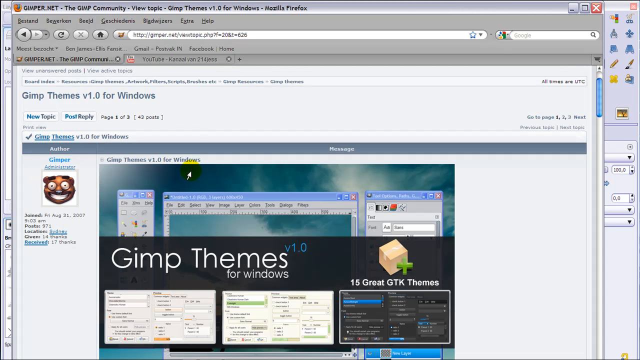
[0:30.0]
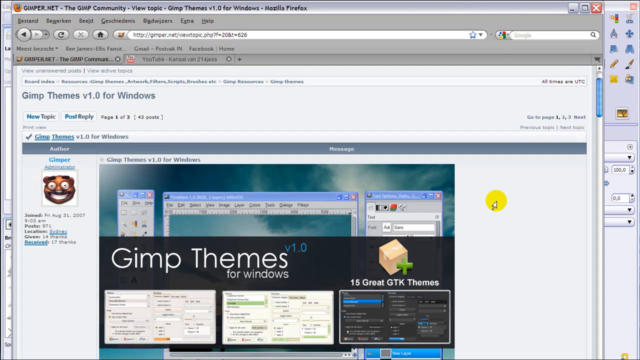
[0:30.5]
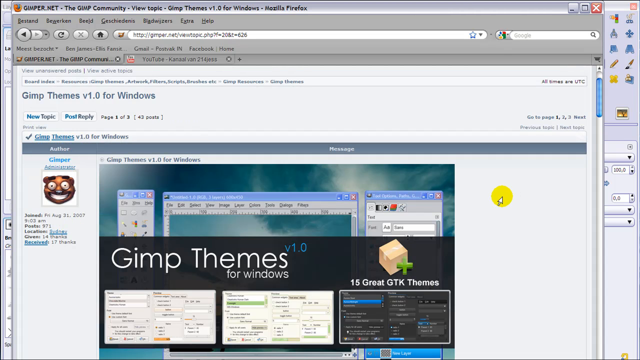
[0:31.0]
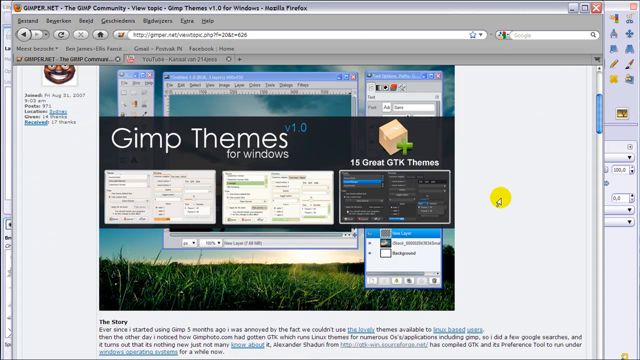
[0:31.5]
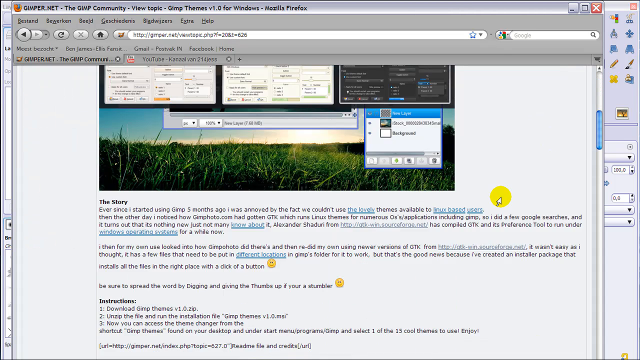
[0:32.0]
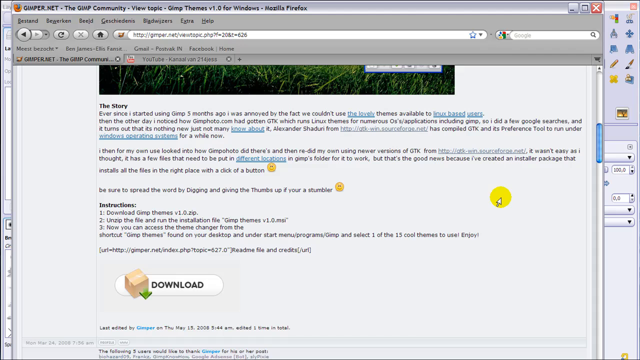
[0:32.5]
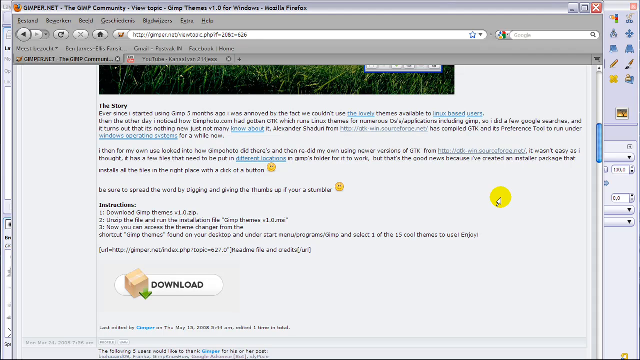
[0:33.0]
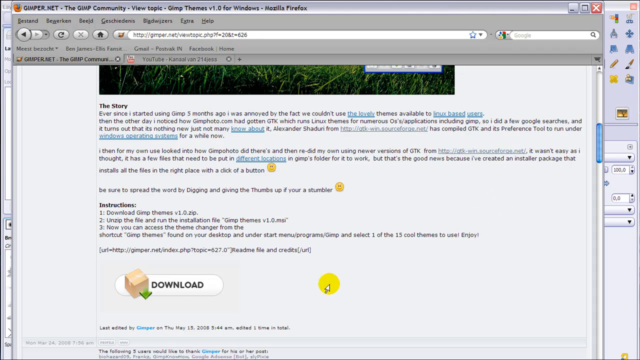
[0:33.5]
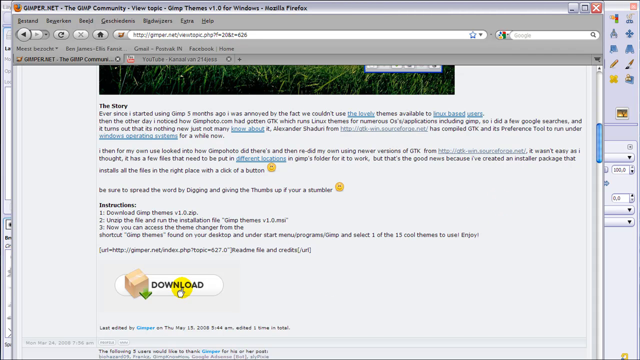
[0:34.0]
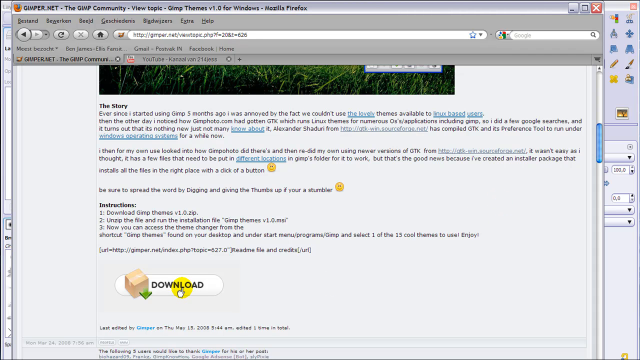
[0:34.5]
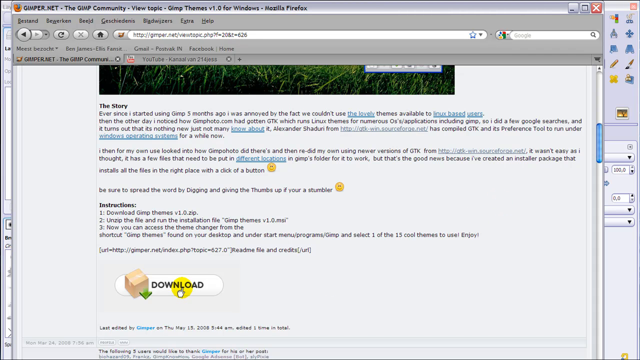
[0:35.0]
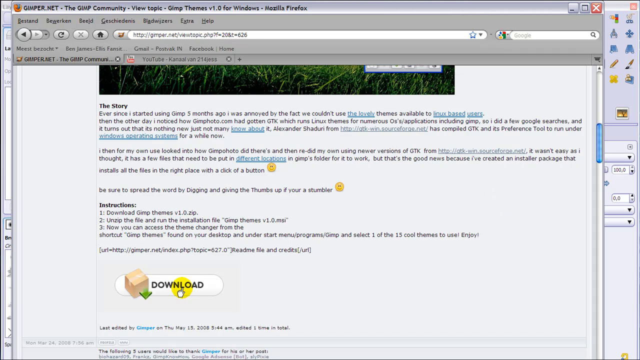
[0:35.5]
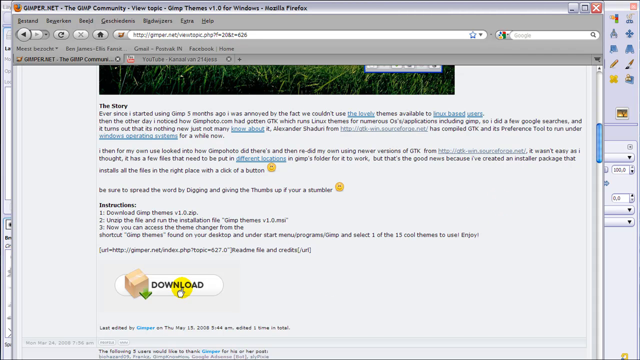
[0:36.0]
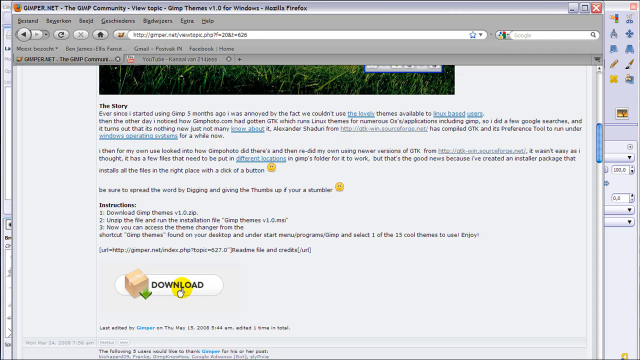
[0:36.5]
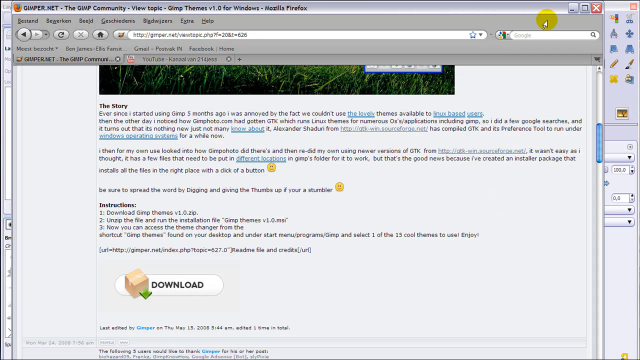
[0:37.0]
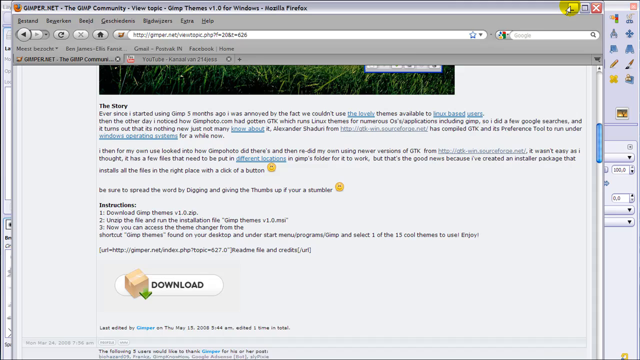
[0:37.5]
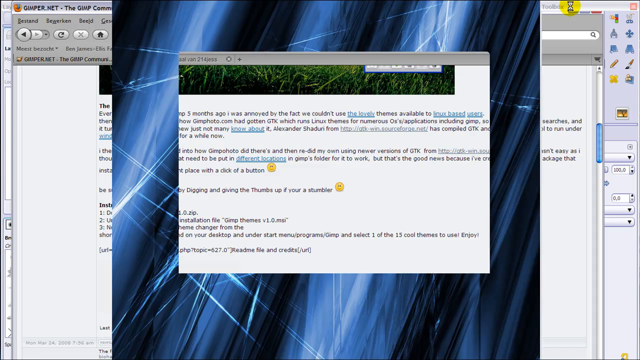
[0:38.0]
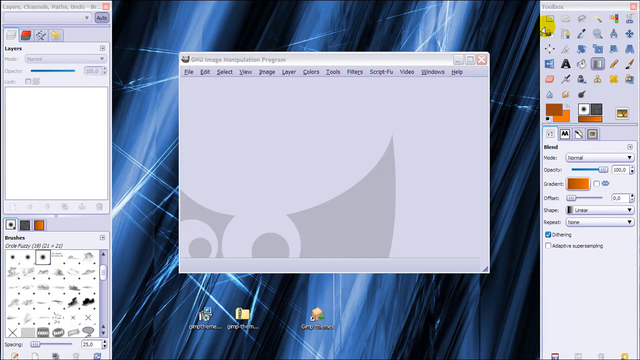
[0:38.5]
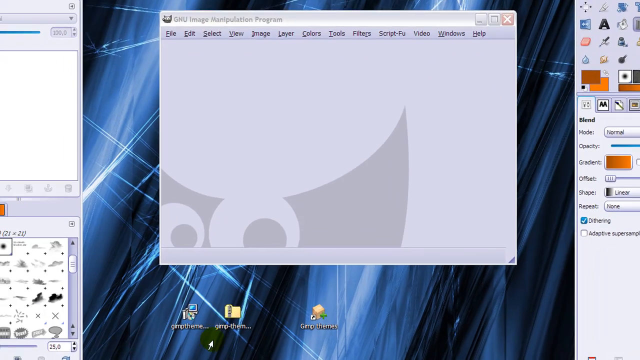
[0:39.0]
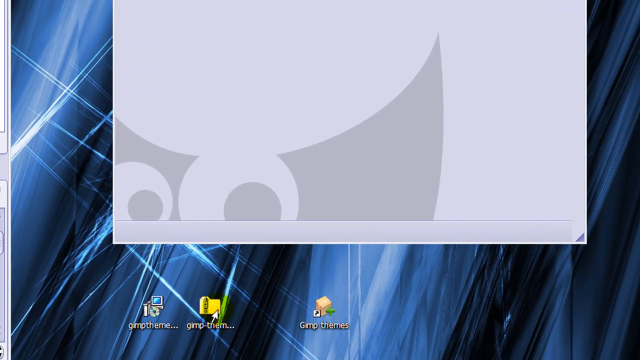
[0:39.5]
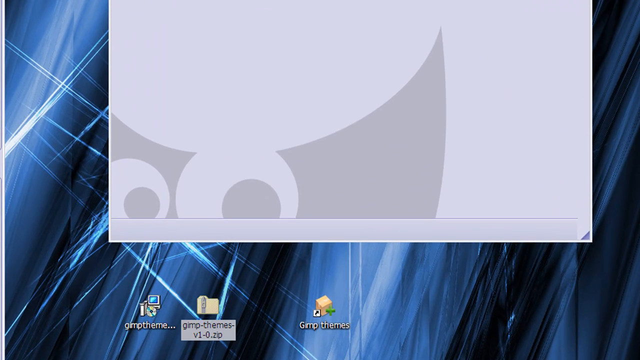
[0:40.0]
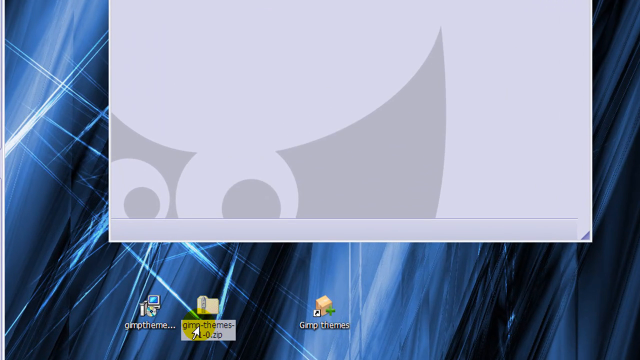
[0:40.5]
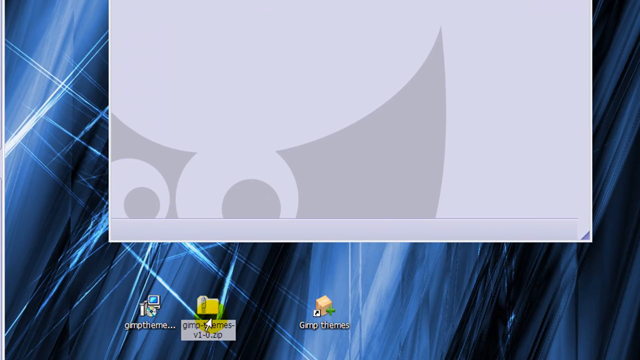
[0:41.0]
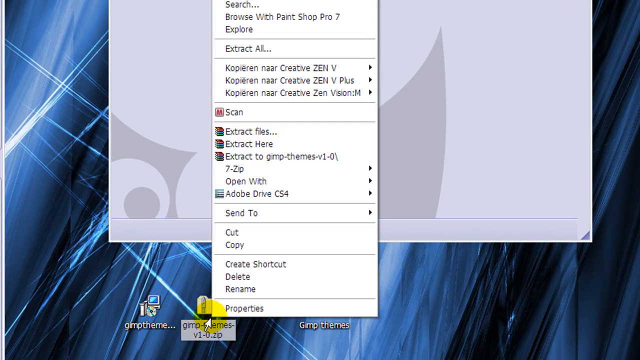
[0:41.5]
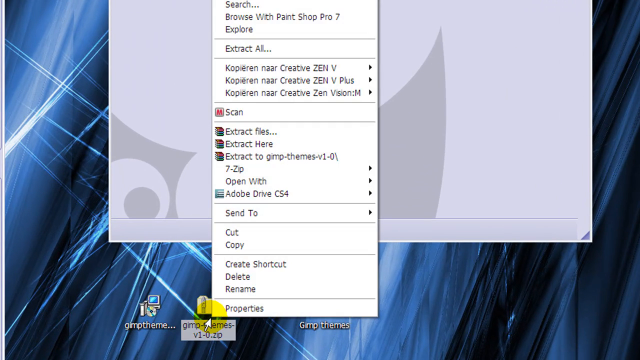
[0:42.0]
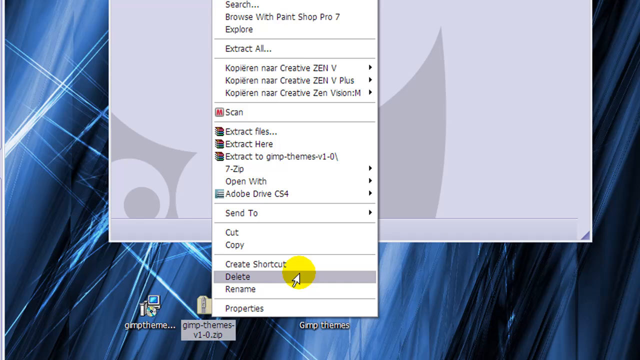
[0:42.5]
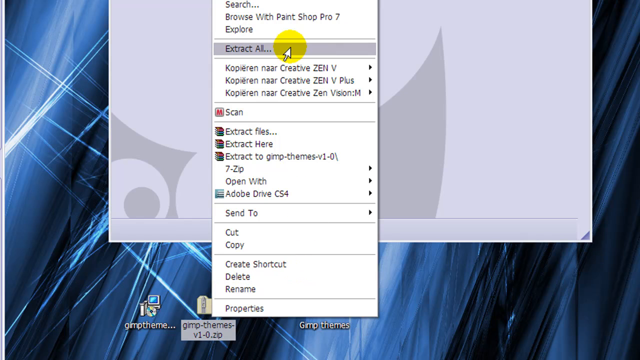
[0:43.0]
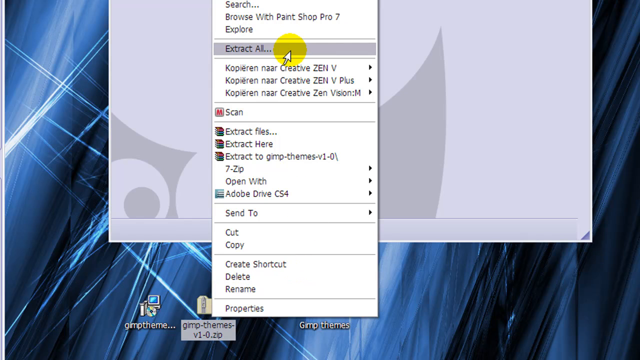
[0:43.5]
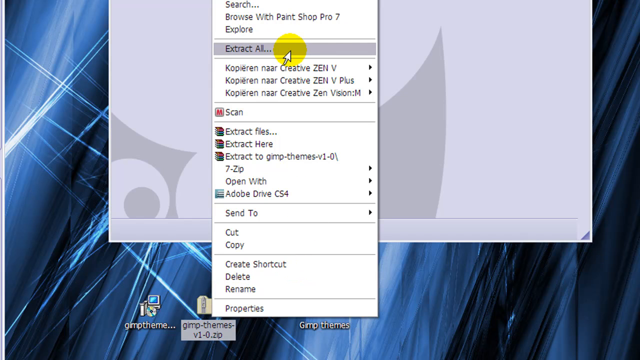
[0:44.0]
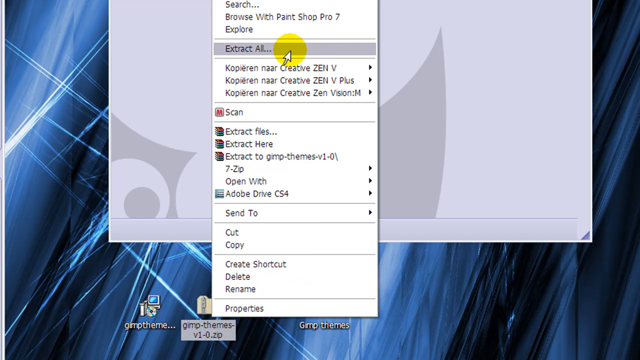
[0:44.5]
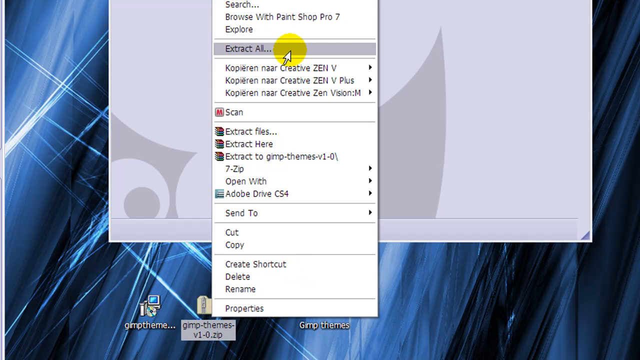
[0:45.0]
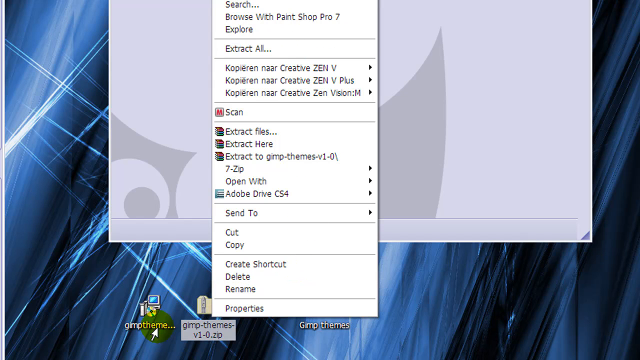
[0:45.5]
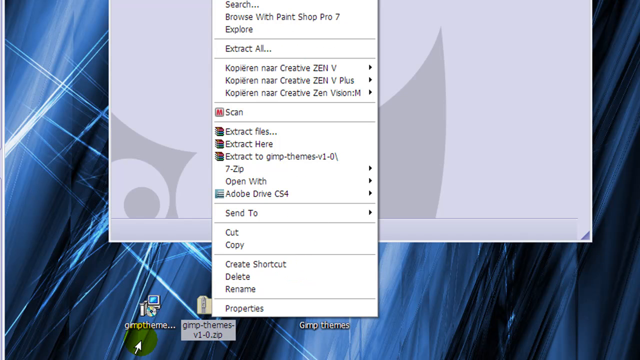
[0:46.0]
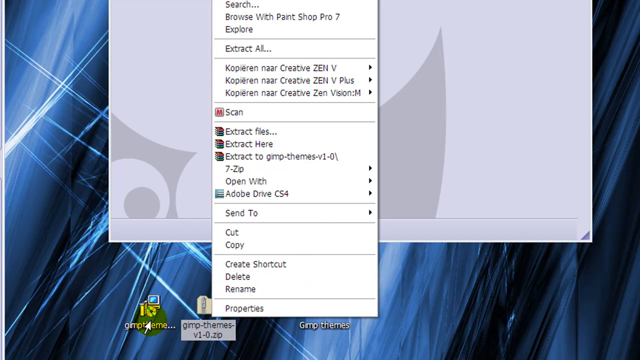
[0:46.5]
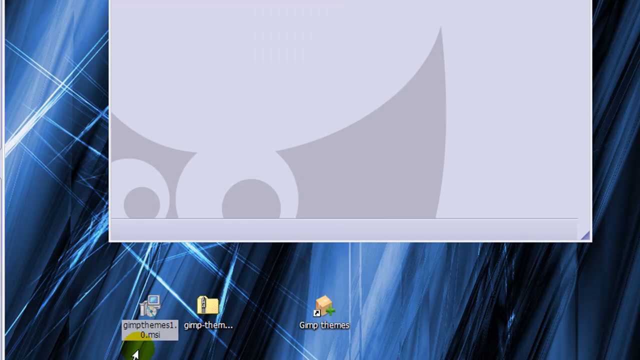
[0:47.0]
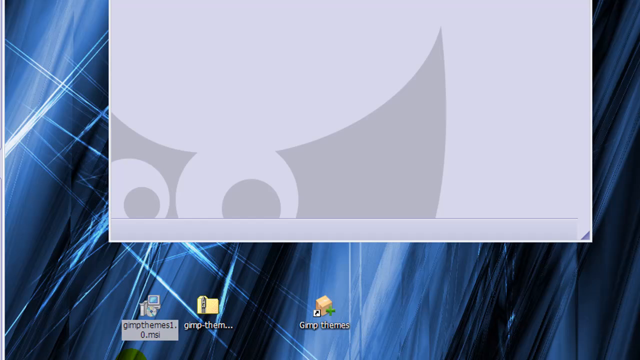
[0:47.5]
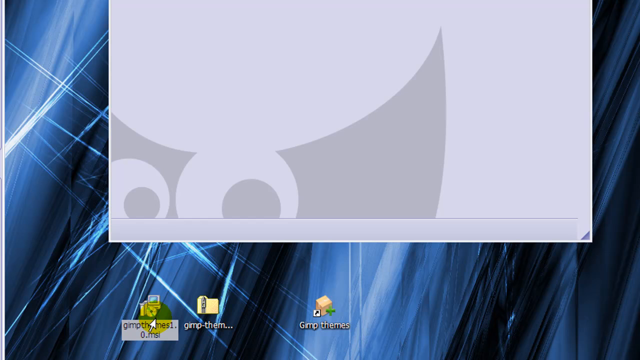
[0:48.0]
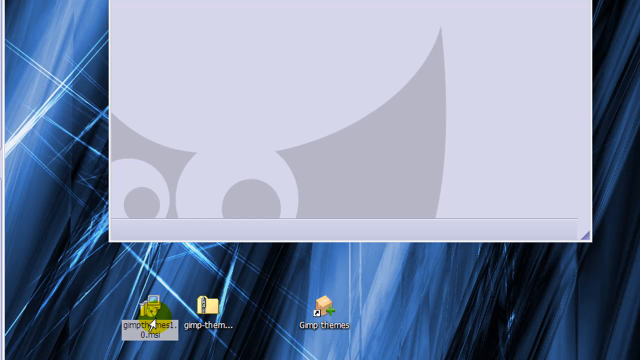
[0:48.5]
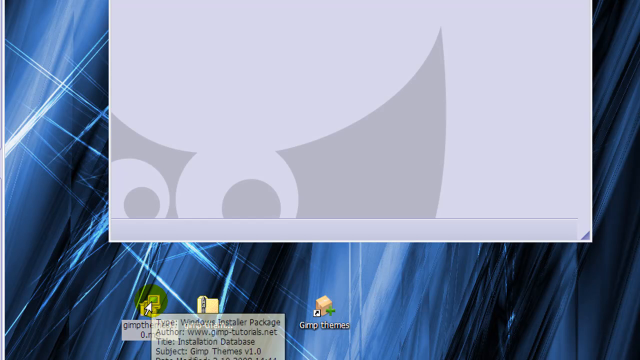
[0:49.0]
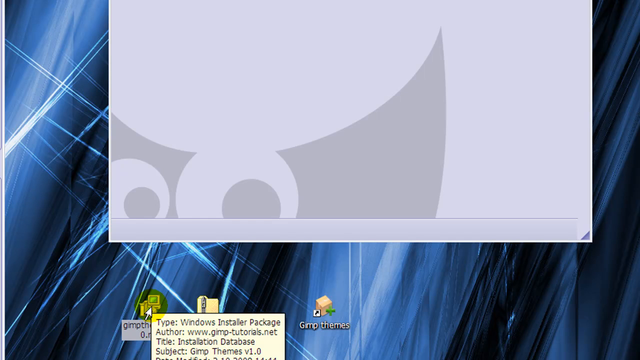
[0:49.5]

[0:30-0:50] On a very vintage desktop, the Firefox web browser is open to a forum page dedicated to the program GIMP. A large graphic reads "GRIMP themes for Windows v1.0", posted August 31, 2007. The mouse cursor, surrounded by a yellow circle, is on the right side of the browser. The user scrolls down the forum post and clicks download at the bottom of the post. After the download, the browser is closed and the desktop appears, with a solid blue background and various white artistic lines. On the desktop is gimp-themes-v1-0.zip; the user mouses over it and uses the context menu to extract all files inside the folder. To the left of it are the files from the folder. The user then clicks on the executable that was downloaded and unzipped.